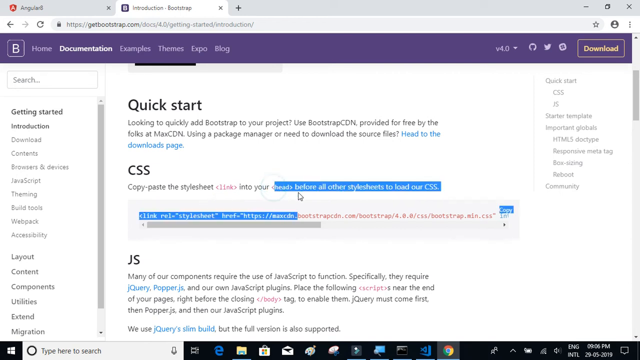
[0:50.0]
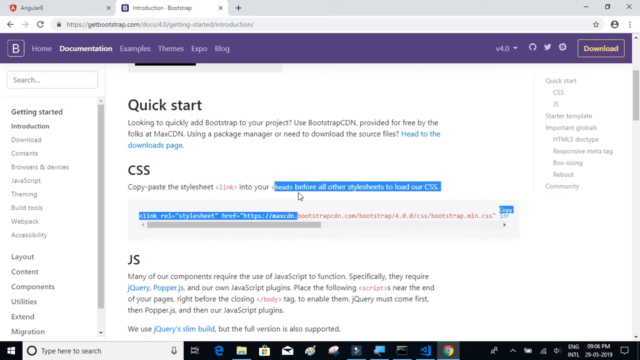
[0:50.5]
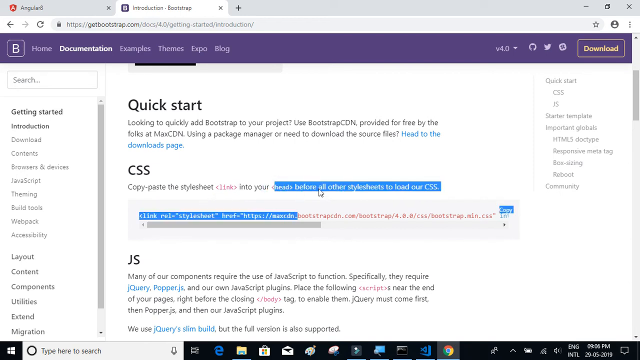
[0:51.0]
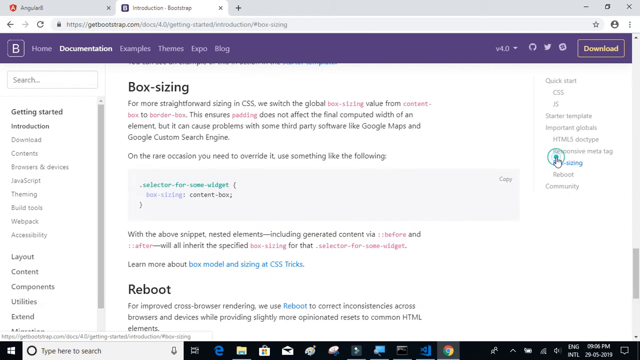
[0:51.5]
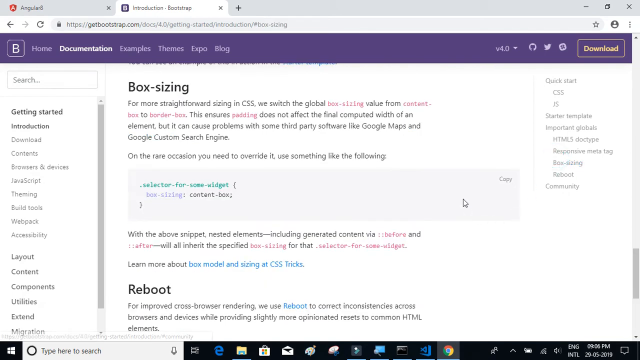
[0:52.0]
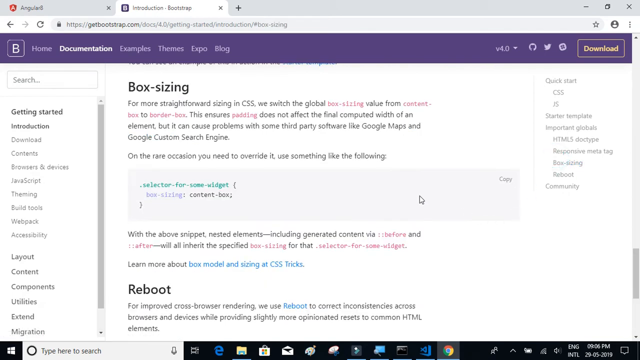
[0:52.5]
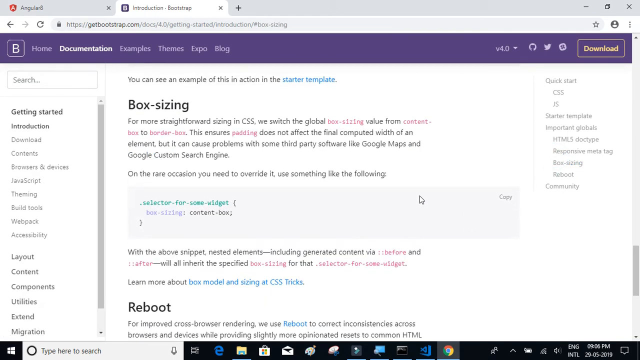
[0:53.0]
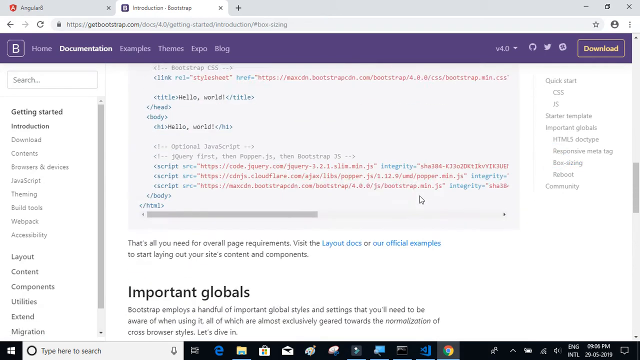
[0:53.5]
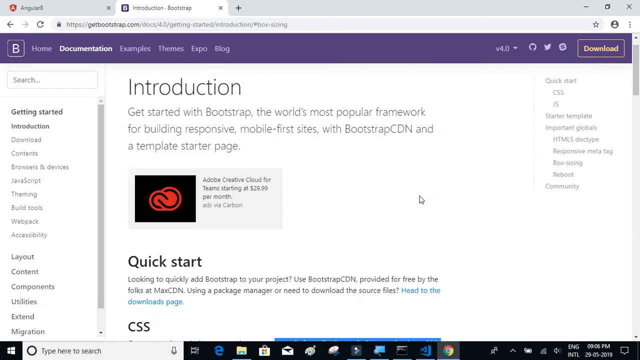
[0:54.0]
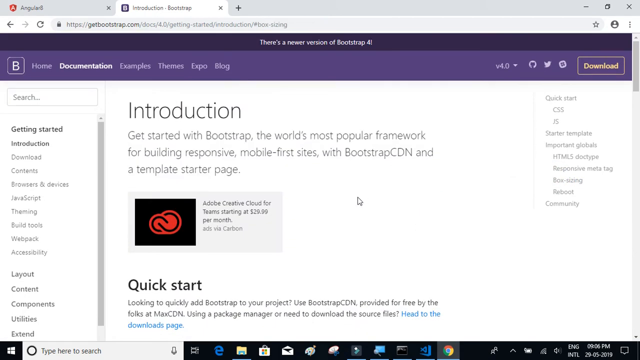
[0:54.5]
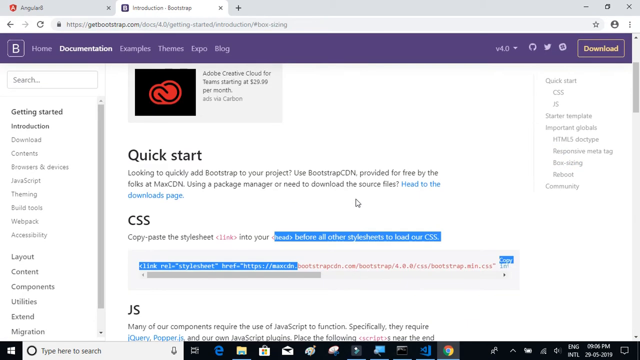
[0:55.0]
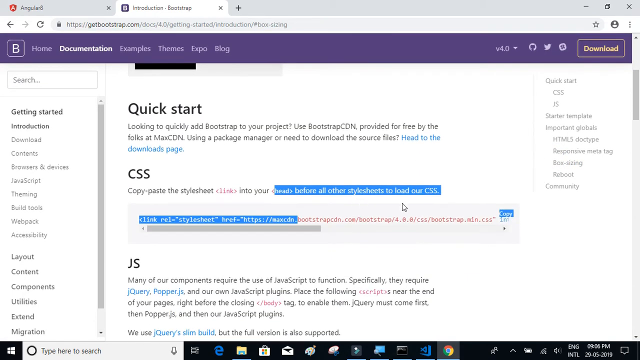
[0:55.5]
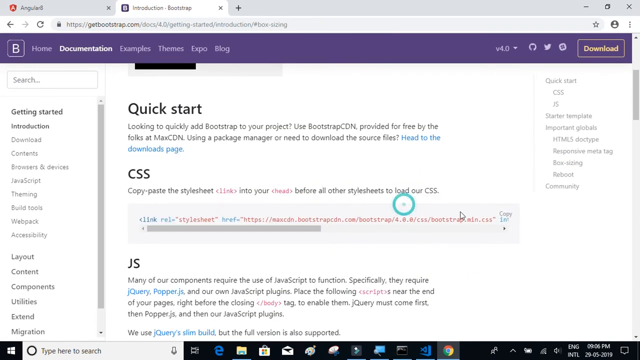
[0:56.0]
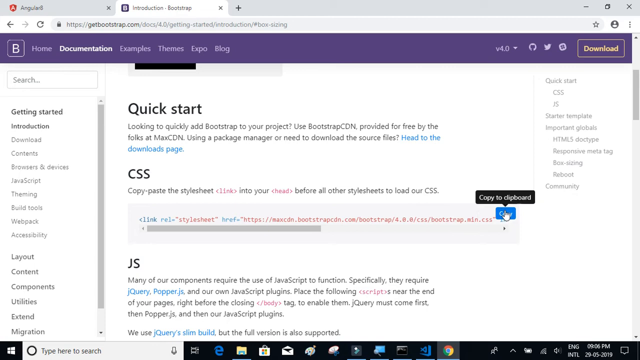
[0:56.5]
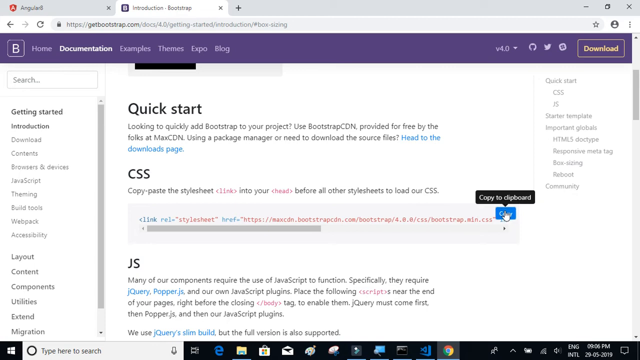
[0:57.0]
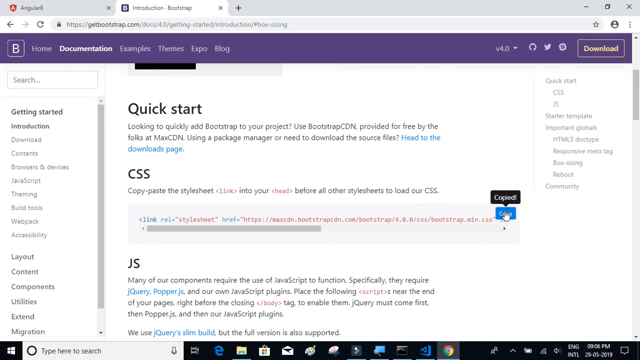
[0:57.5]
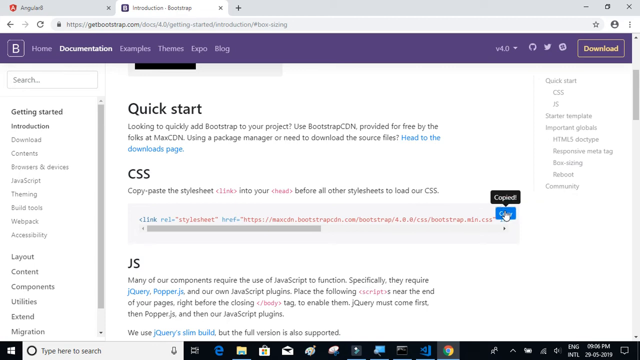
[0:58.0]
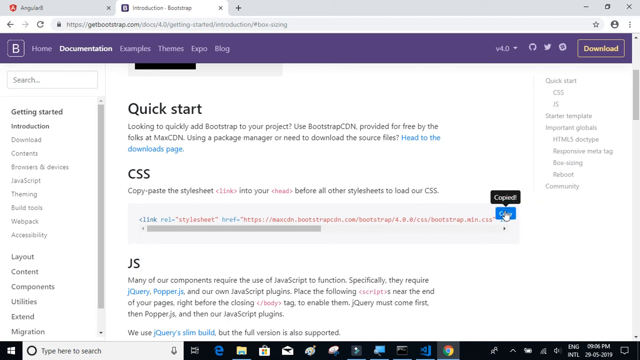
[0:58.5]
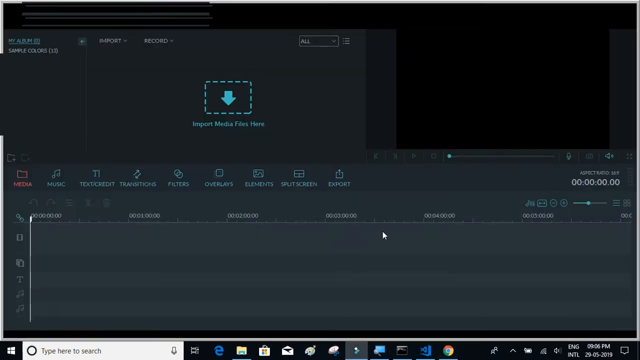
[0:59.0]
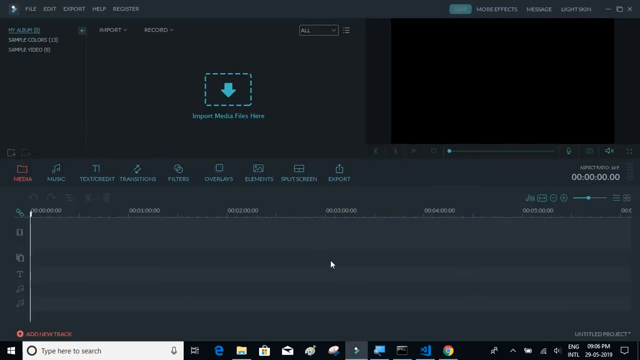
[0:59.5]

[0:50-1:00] A quick start section on box sizing reads "for more straightforward sizing in CSS, we switch the global box sizing value from content box to border box. This ensures padding does not affect the final computed width of an element, but it can cause problems with some third-party software like Google Maps and Google custom search engines." It also says "on the rare occasion you need to override it, use something like the following", followed by some computer code. There is also a section that says "reboot". The user slowly highlights different areas, copies them, goes to another page, comes back and copies another area. Each copied area turns blue when highlighted, and the clicking is kind of fast. The copied text is put into a different web page, and a black area appears that says "copied". The area being copied says "head before all other style sheets to load our CSS". The cursor moves quickly up and down between different sections of the web page.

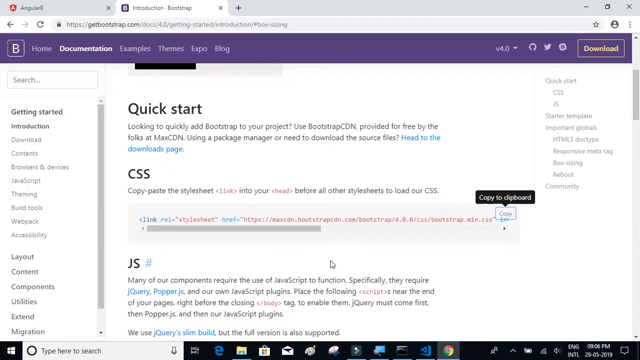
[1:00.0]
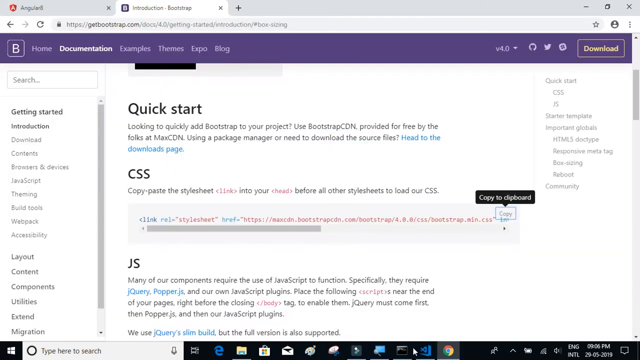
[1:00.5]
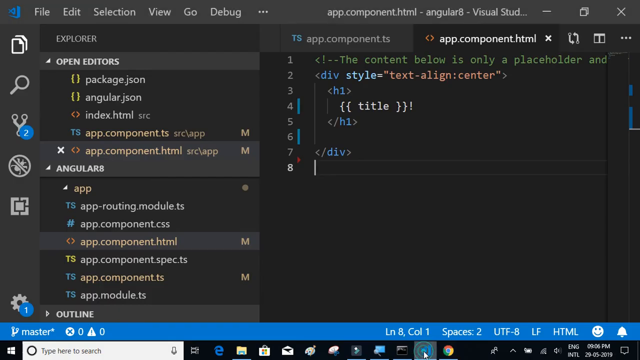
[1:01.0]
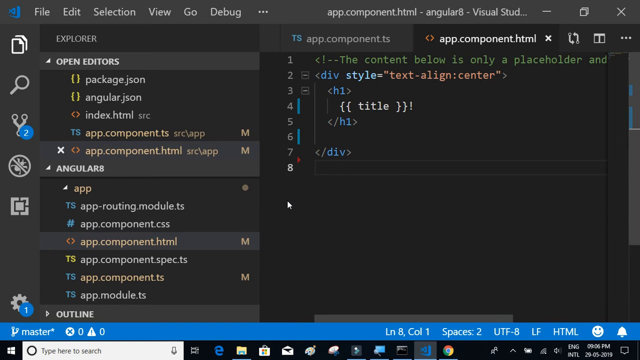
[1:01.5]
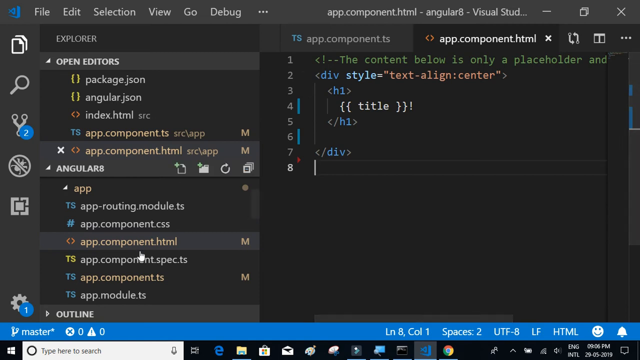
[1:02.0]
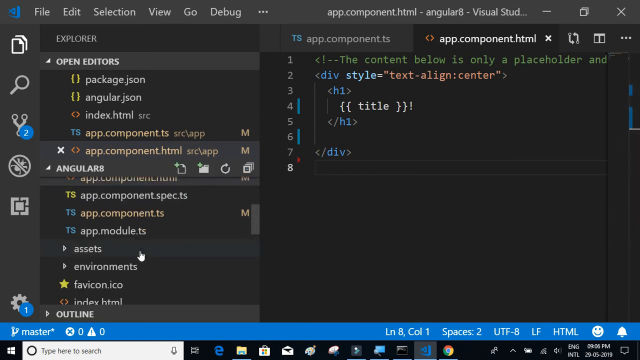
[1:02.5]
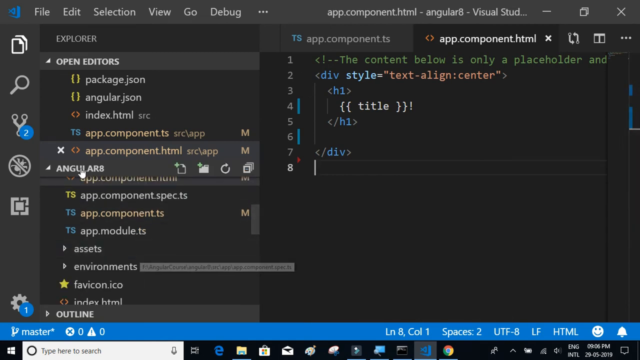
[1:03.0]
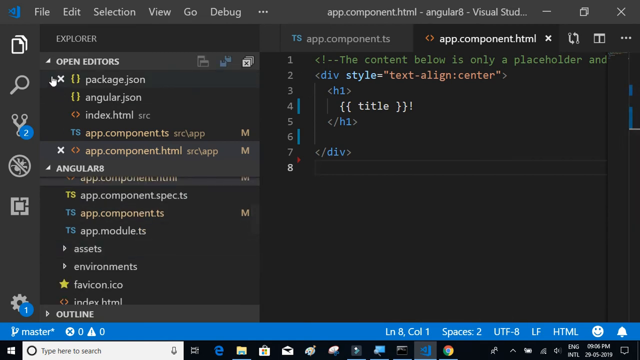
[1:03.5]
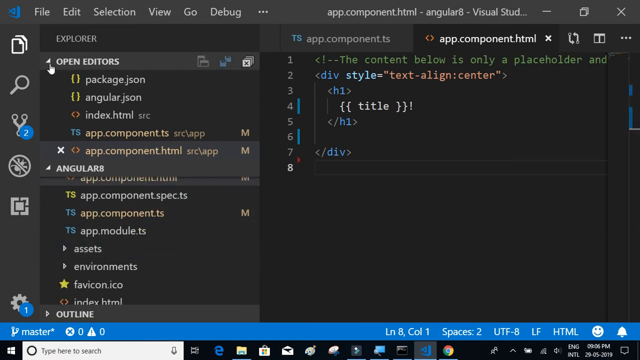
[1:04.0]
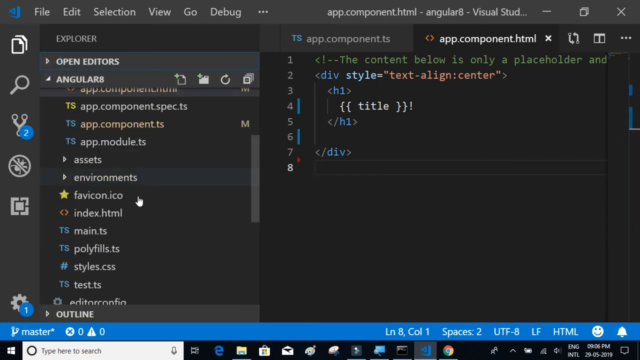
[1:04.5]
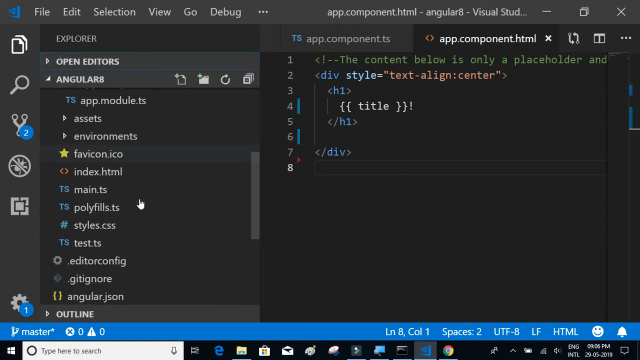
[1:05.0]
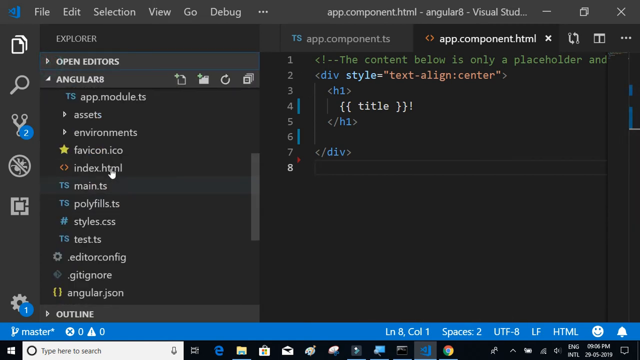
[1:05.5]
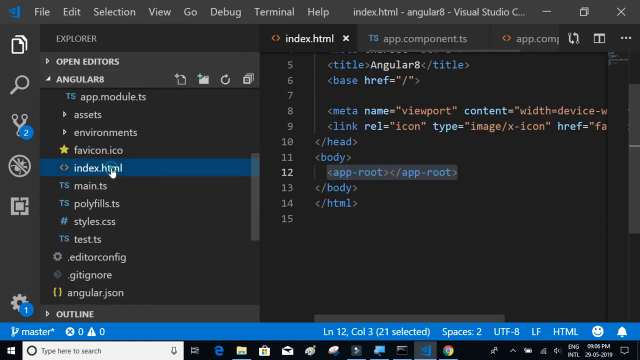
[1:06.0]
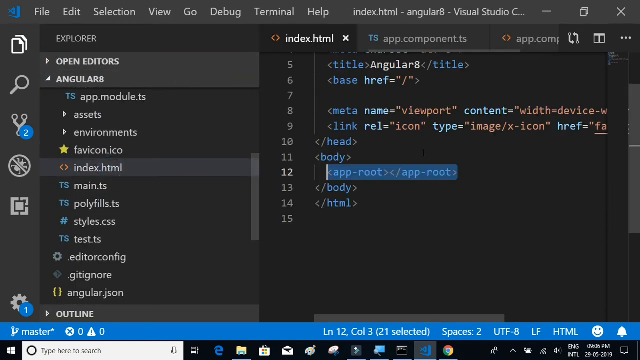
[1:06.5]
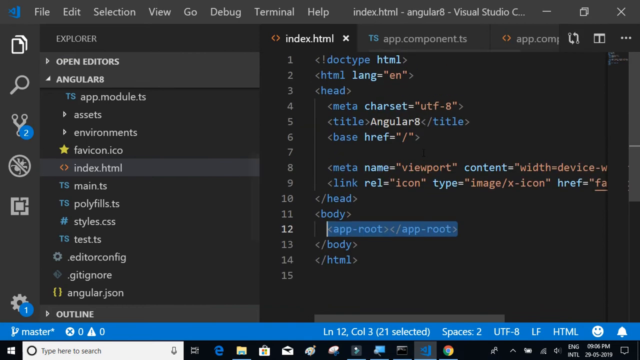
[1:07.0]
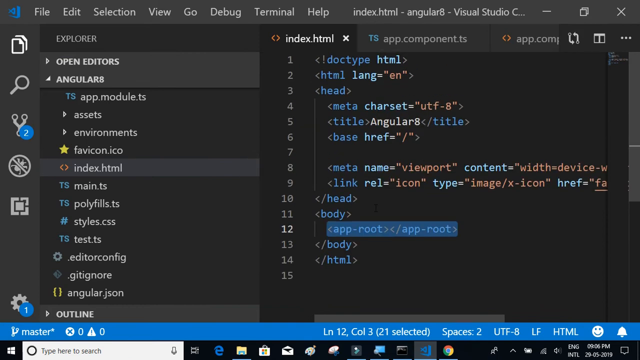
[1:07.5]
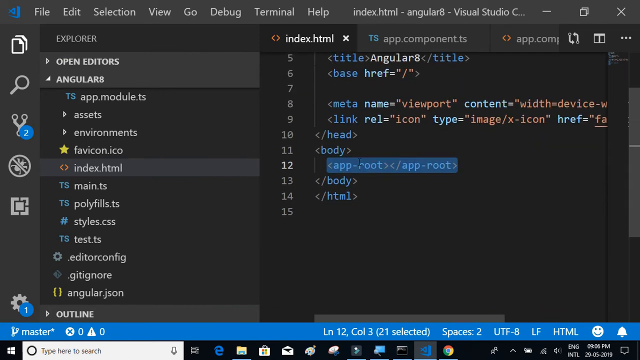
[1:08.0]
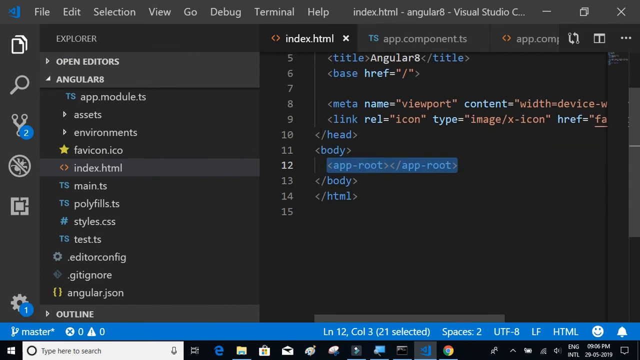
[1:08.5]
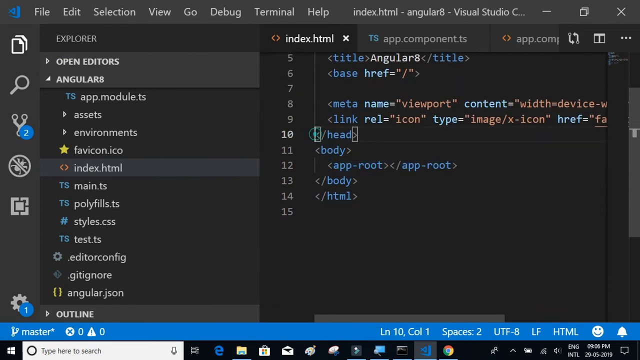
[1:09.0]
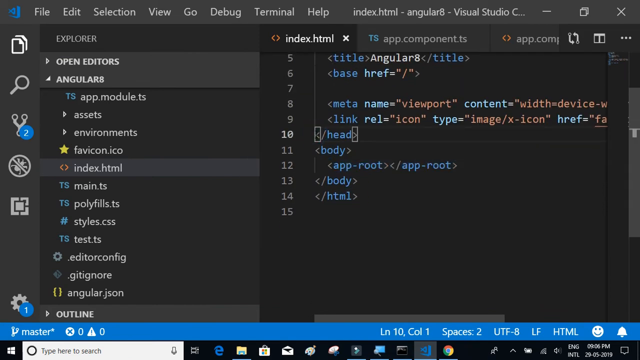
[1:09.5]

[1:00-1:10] A tab is open on a web page, and at the top it says "quick start". A section in the middle says "CSS" in bold, and further down the side "JS" appears. The user appears to be doing computer programming: they click on "open editors", then on "index.html", and then move to the right side of the page, working very fast. The code on the right is partly in blue font, partly white, partly brown and partly tan. One highlighted area says "app-root//app-root". The cursor sometimes moves up and down very fast.